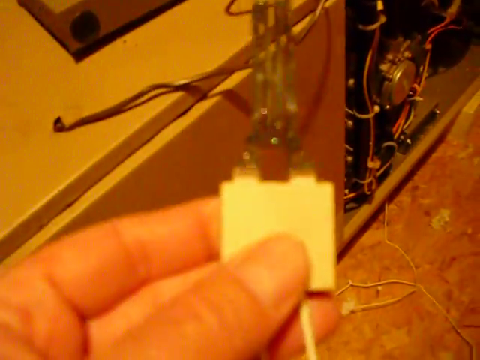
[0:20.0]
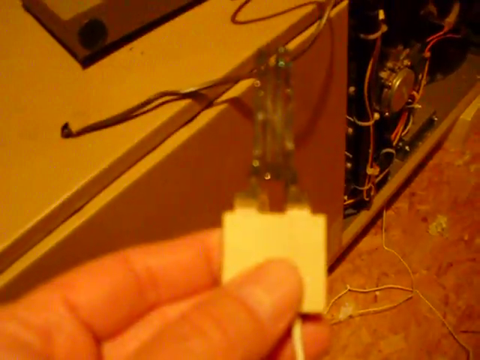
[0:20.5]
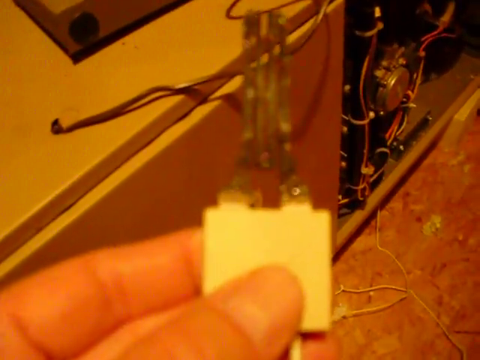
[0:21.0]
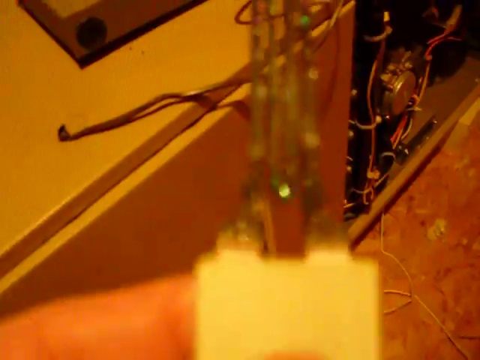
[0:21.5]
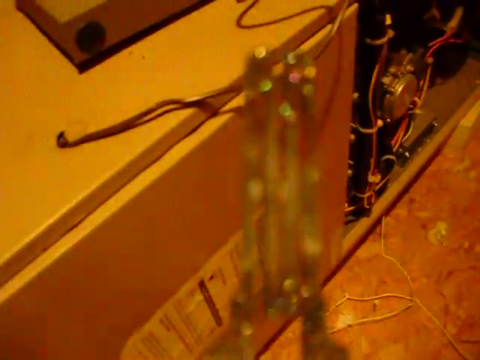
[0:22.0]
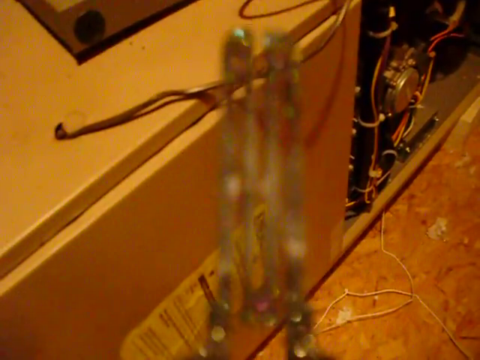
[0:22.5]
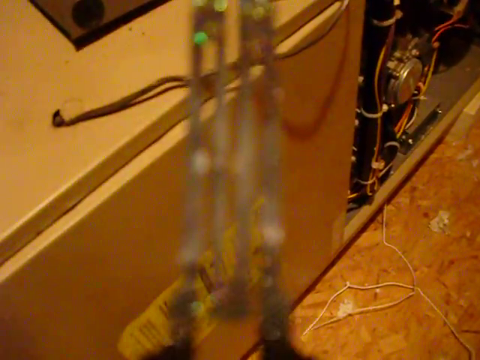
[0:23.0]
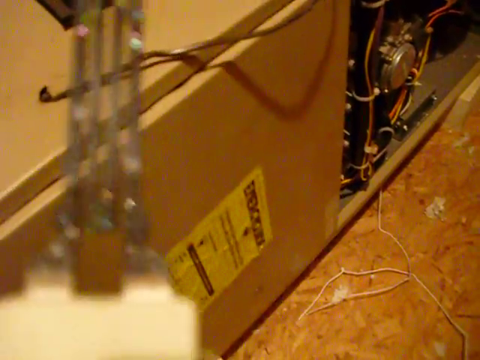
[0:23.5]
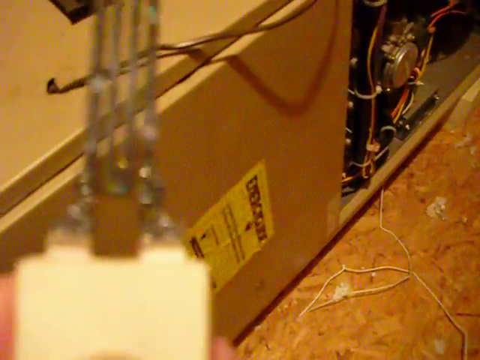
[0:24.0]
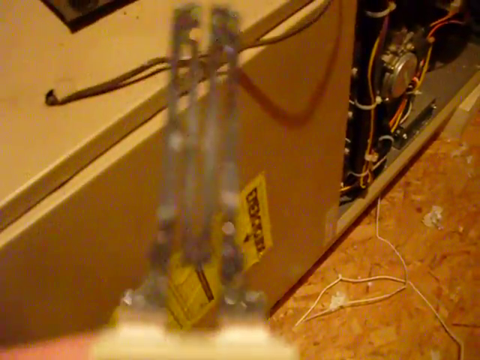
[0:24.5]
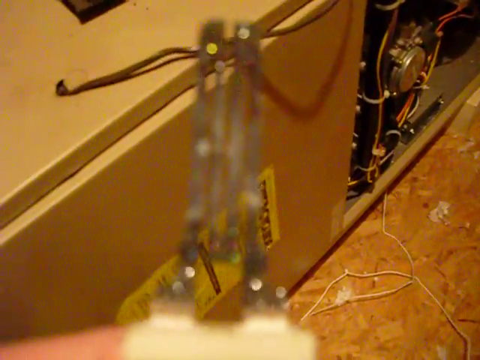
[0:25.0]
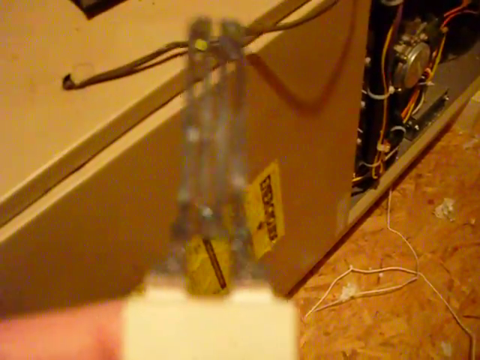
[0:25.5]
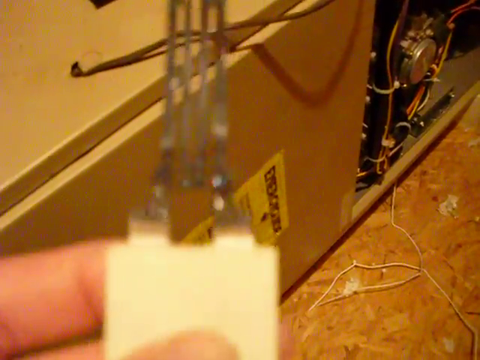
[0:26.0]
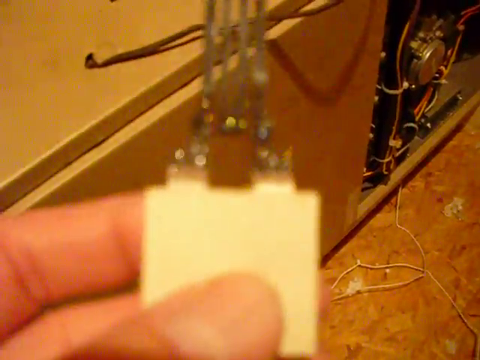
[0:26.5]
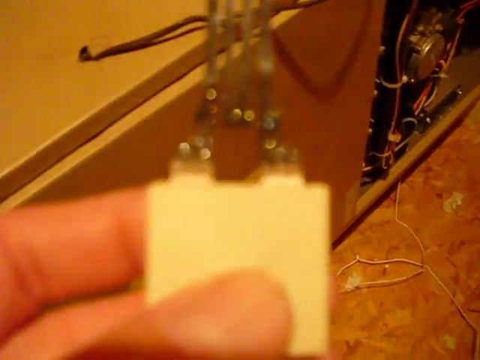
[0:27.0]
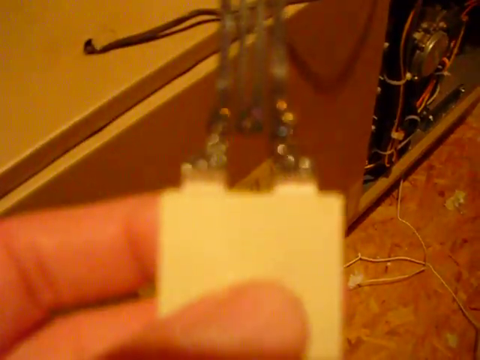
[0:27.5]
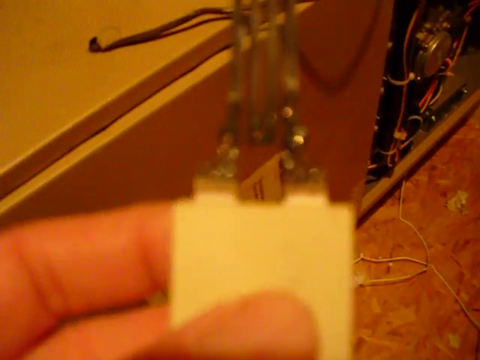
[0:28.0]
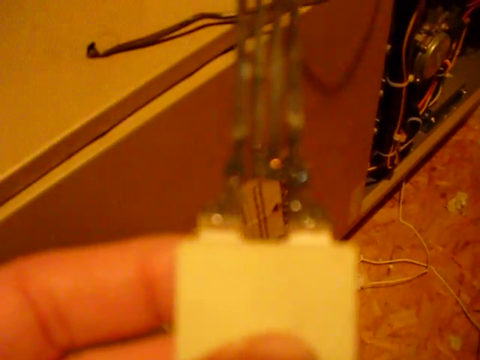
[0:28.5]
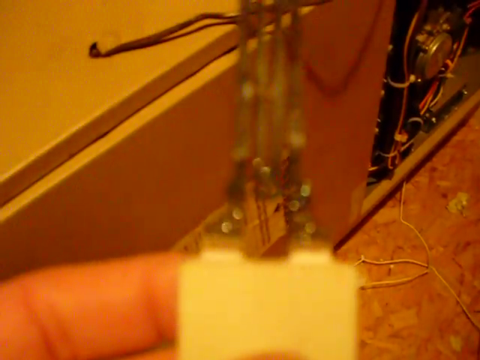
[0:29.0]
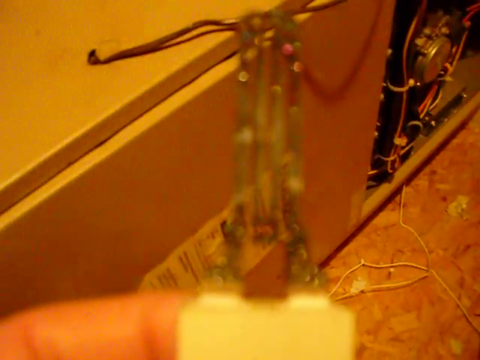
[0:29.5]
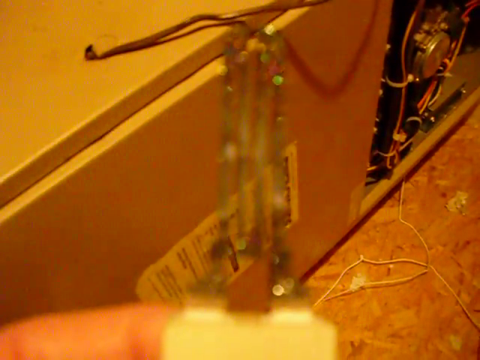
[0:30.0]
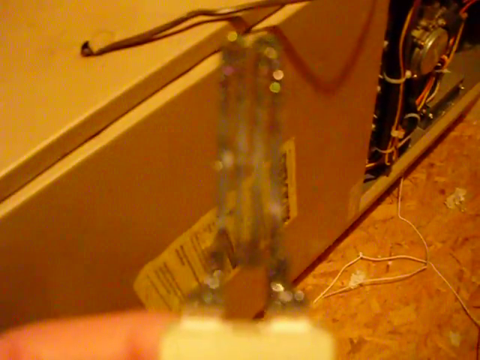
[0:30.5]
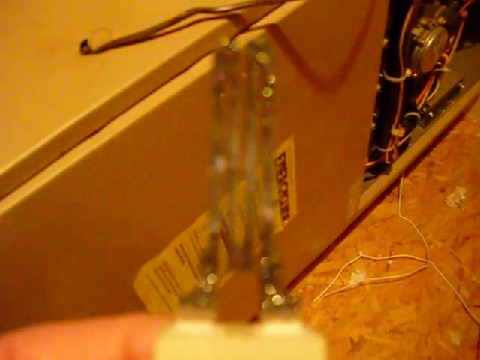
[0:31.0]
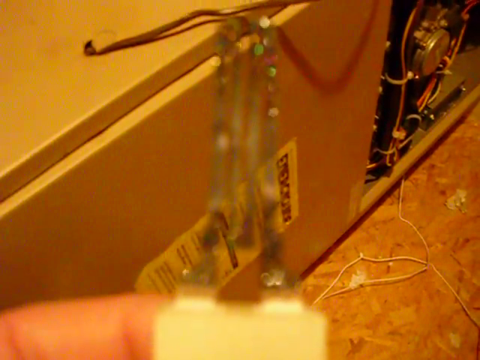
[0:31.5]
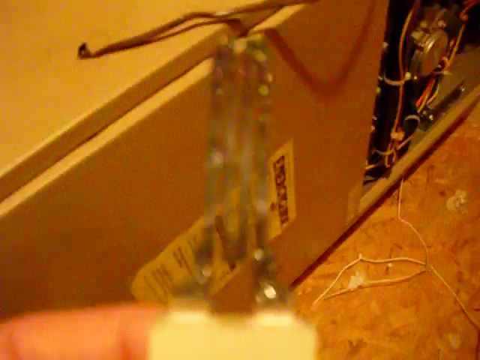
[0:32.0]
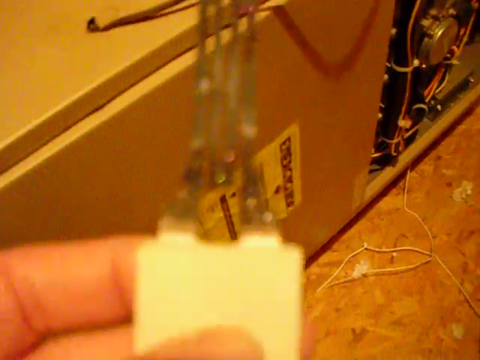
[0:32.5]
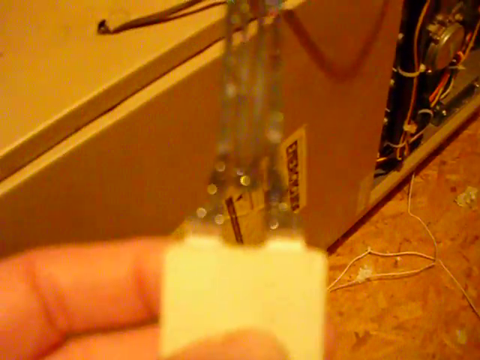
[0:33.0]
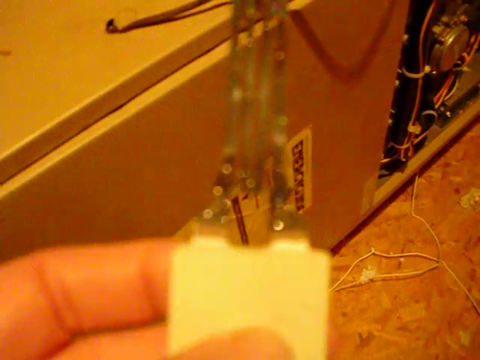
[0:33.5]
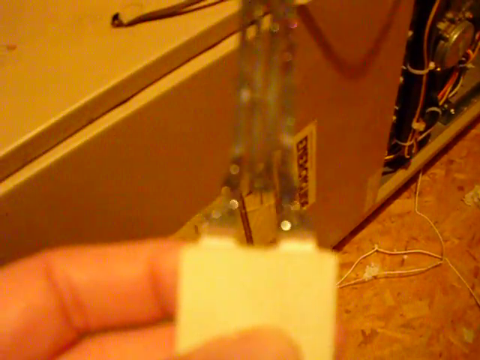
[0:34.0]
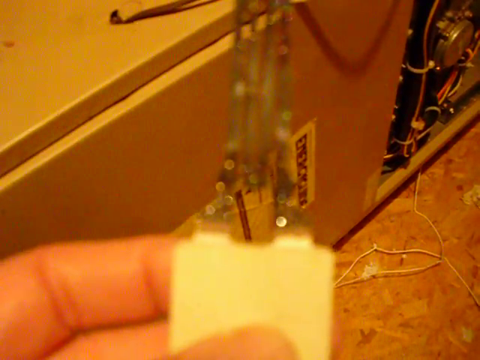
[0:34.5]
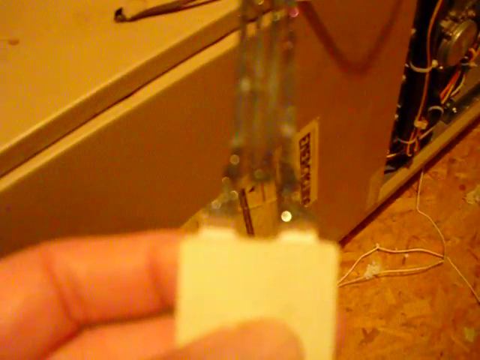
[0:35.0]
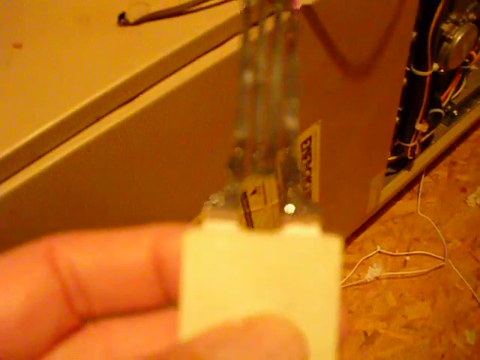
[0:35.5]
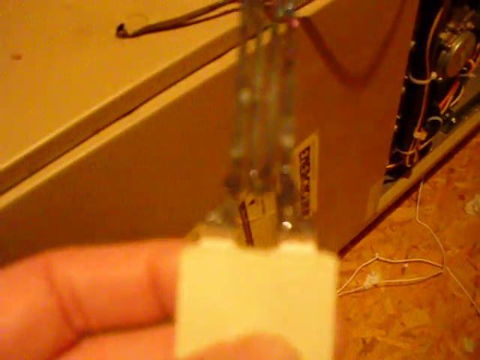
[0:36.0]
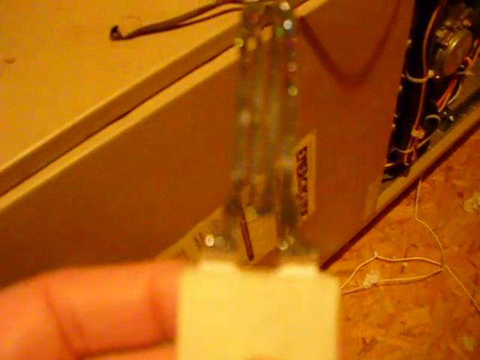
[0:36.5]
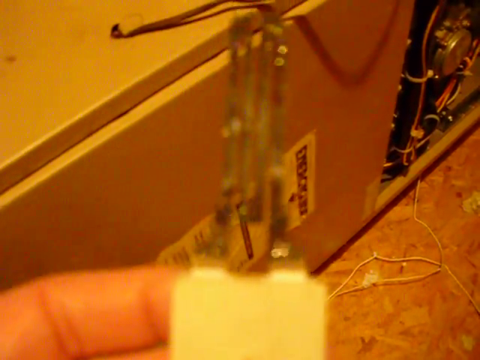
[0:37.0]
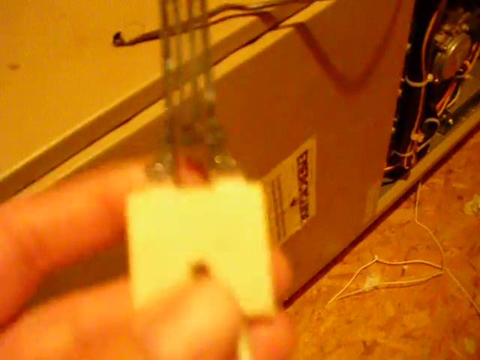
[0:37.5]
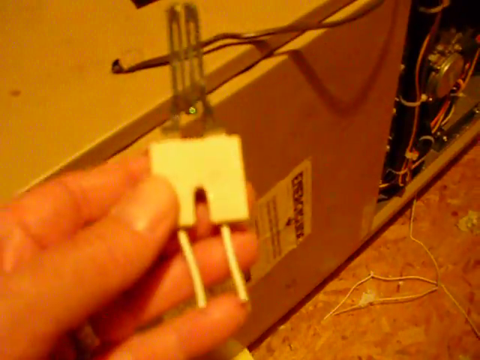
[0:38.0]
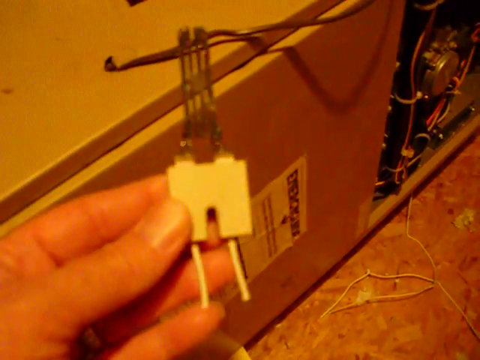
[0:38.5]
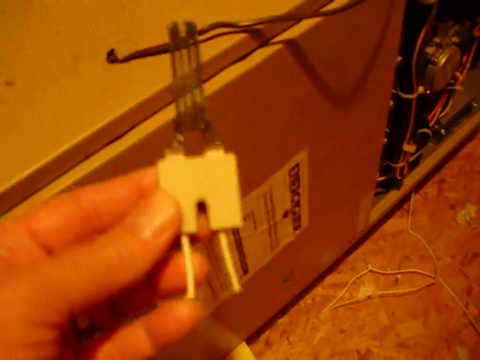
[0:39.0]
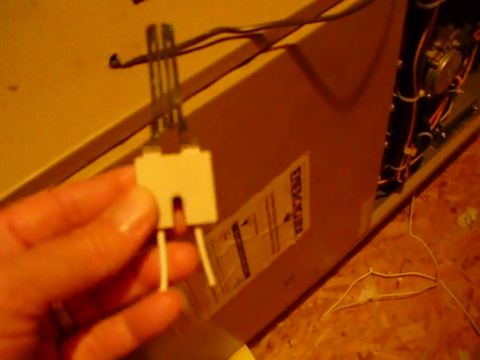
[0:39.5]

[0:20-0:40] Either a circuit breaker or a socket-like apparatus is in focus, though the device itself is out of focus as the hand moves it around. The metal box with electrical things inside is still visible in the background, with cables running out of it in different directions. The camera closes up on the circuit-breaker-like apparatus held by the hand and moves over different parts of it. When the hand moves it away from the camera, two cables can be seen running from the back of it; the cables are cut, so they are not connected to anything. The video apparently is a tutorial on how to fix an electrical appliance. The environment is dimly lit, making some details hard to see.